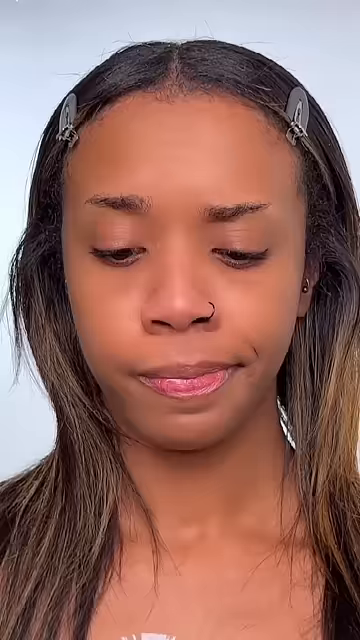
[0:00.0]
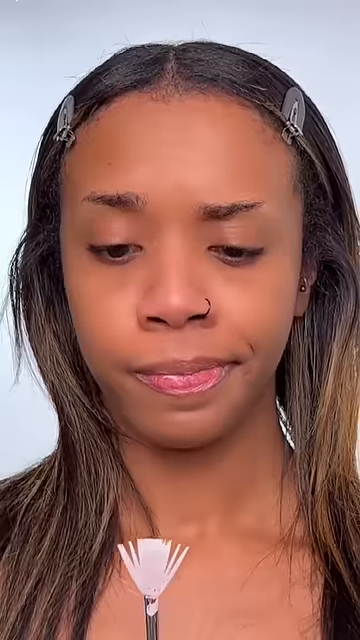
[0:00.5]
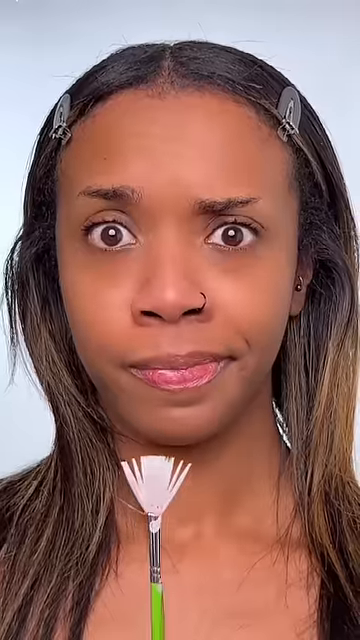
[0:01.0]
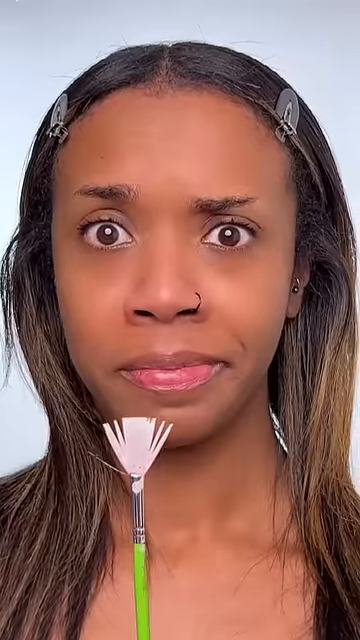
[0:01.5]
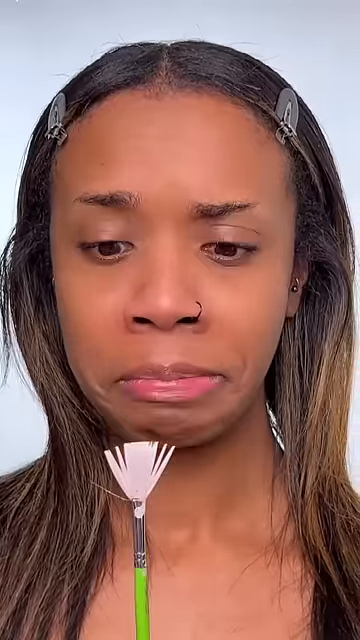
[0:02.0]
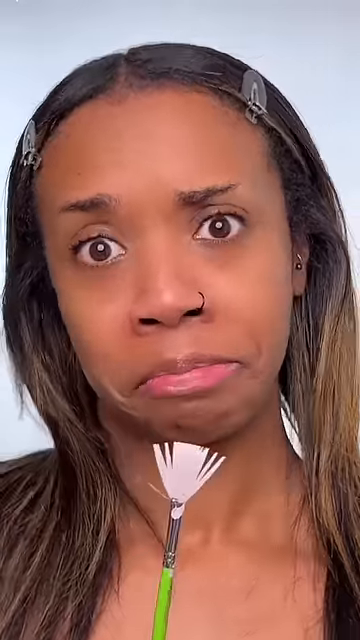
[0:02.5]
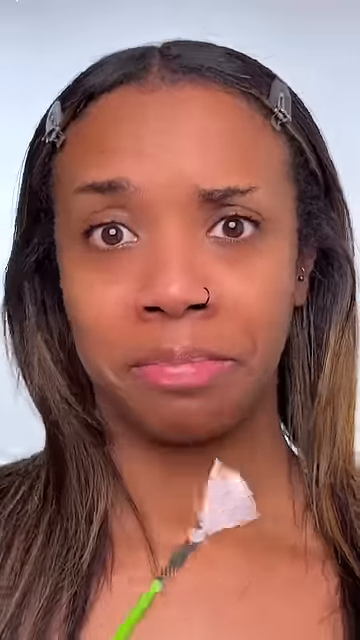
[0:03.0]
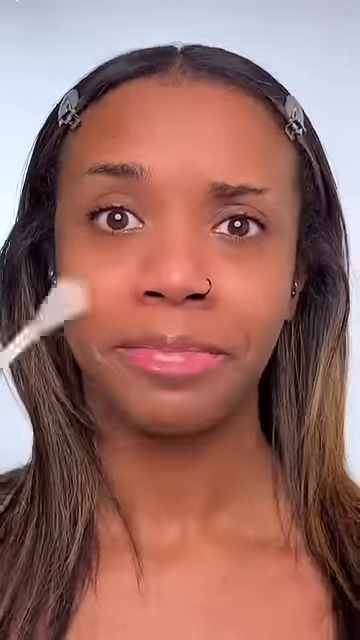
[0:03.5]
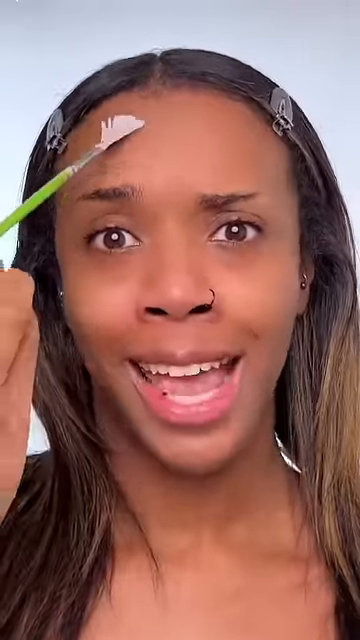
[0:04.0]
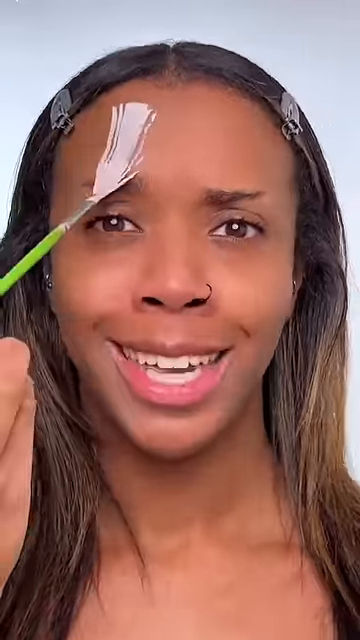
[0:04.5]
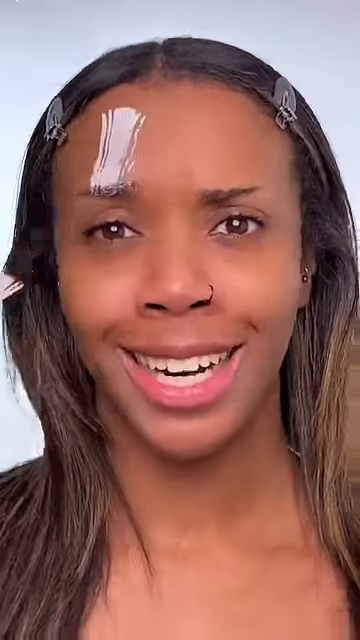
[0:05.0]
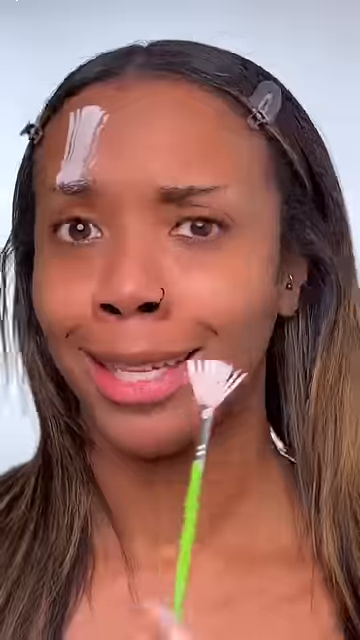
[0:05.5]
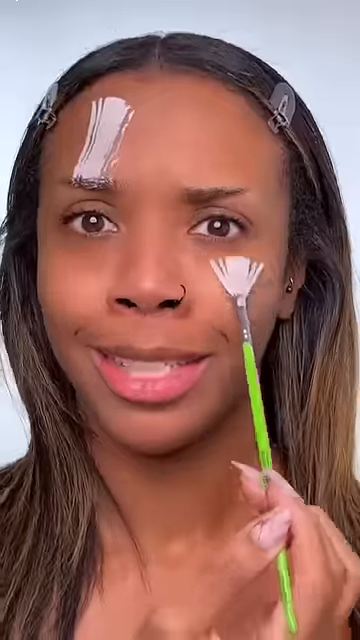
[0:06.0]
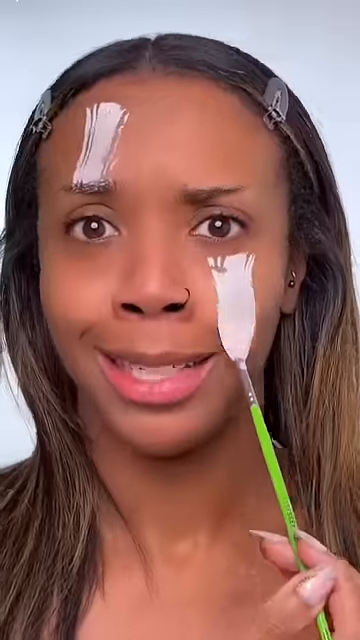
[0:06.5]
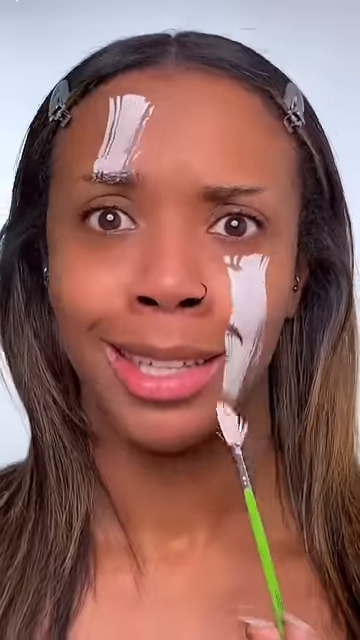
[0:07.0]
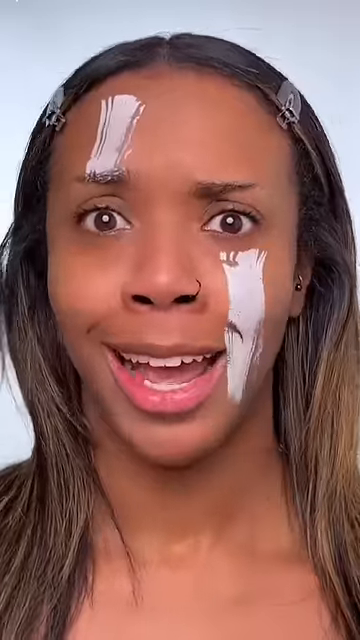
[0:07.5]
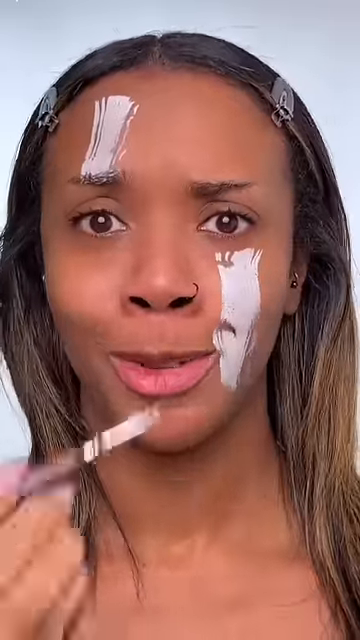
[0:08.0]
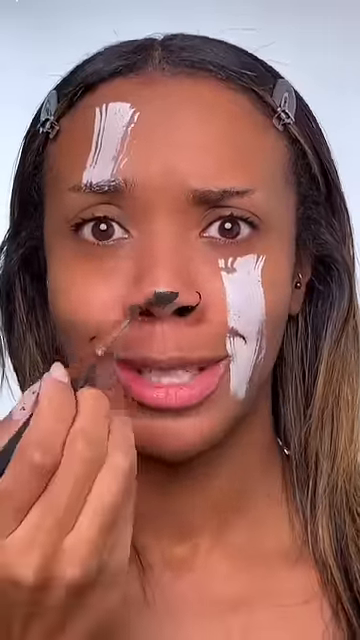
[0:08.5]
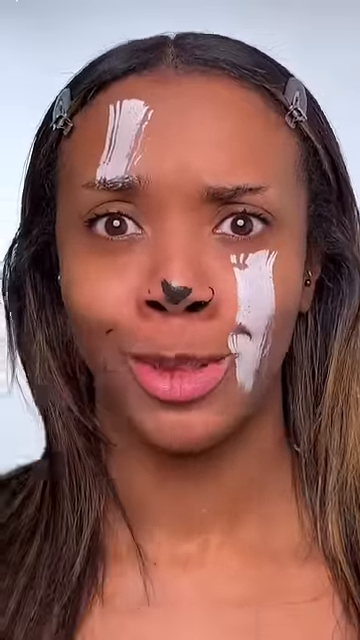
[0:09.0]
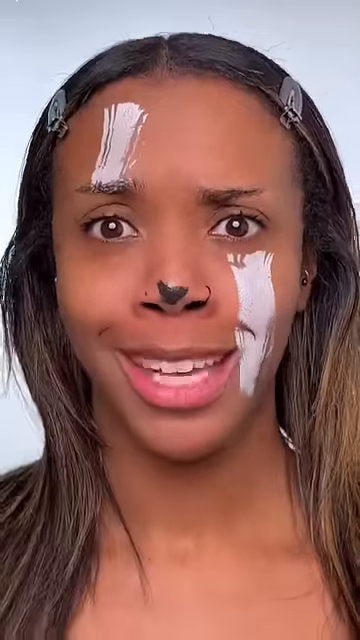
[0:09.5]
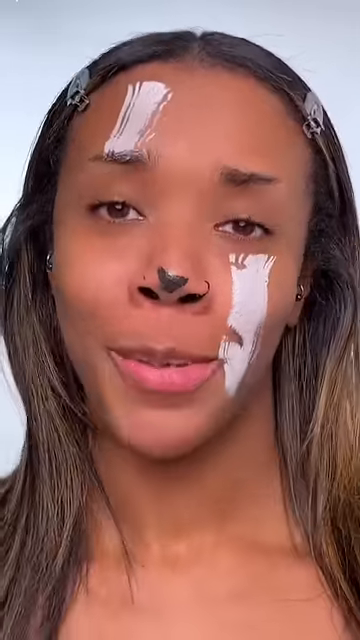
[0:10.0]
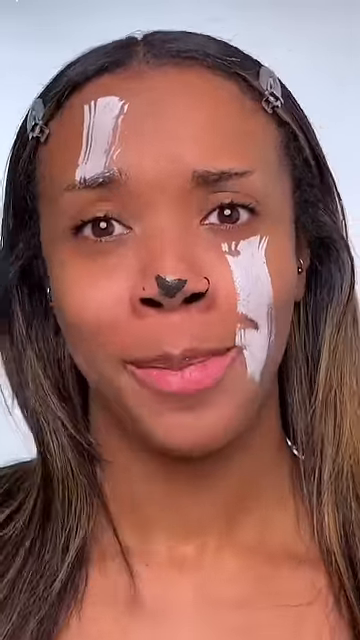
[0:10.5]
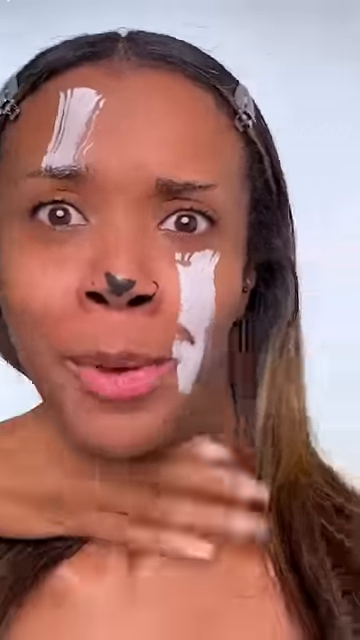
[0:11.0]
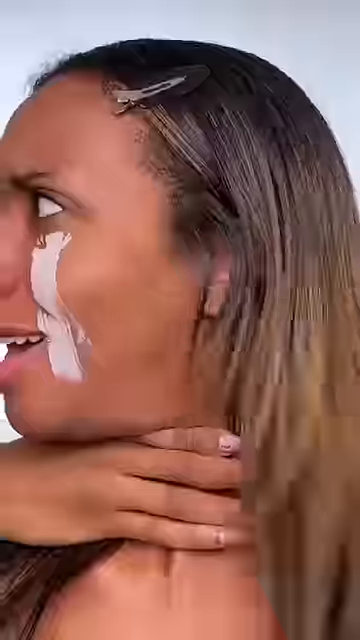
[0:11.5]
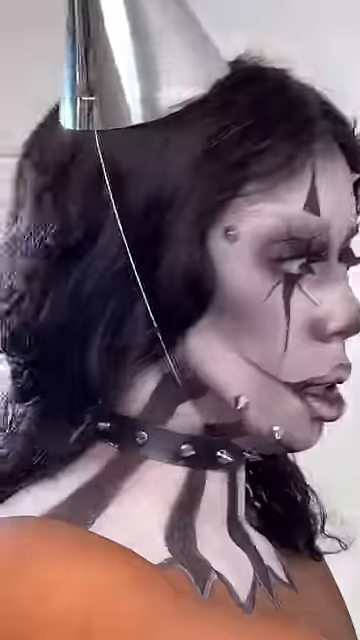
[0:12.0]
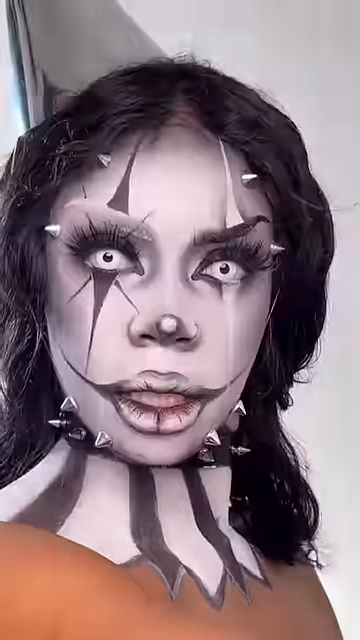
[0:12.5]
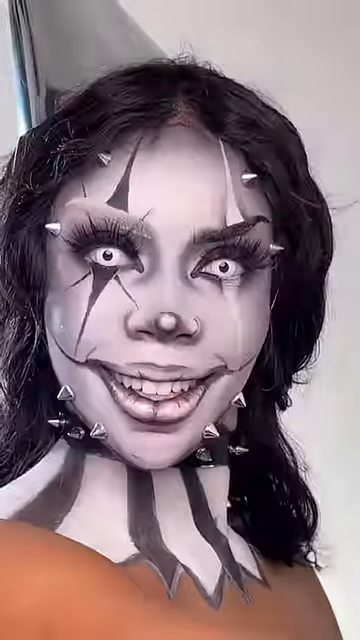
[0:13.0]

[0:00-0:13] A dark-skinned woman has pretty long hair that is apparently almost dirty blonde, though more dark than light. She takes a green paintbrush and starts to paint herself, painting the right side of her forehead downwards while she looks like she is singing or saying something. She then paints her left cheek downwards in the same fashion; the paint is white. Next she takes another green paintbrush, smaller this time, and paints just the tip of her nose black in a V shape. Somebody then grabs her by the neck, and she looks to the left, where there is someone who is perhaps supposed to be her. She looks to the right at her, then turns her head and looks directly at the viewer, almost like a scary, unexpected moment. She has all white and black makeup on, looking kind of like a member of KISS, and she has really big, almost drawn-looking lips that are pink and very shaded.